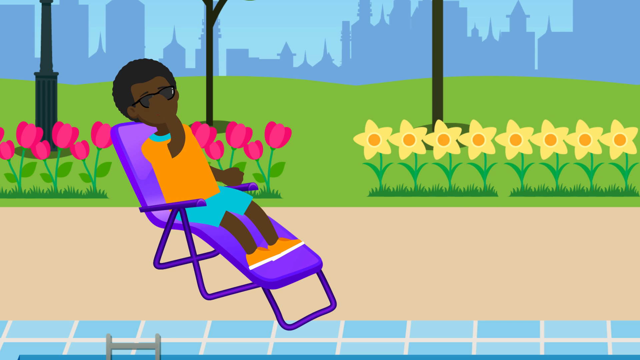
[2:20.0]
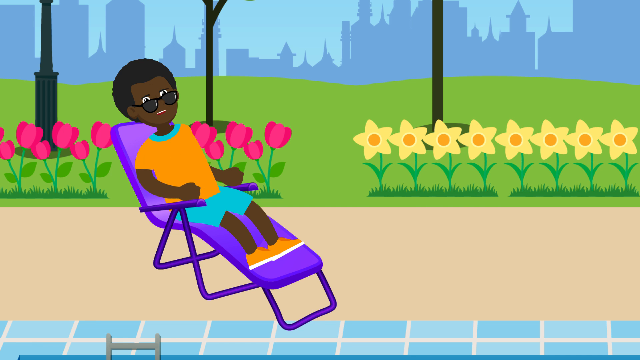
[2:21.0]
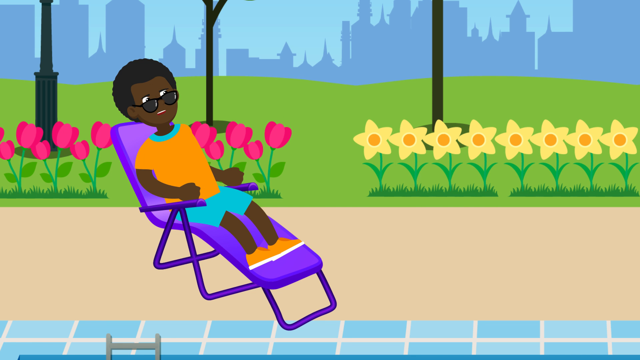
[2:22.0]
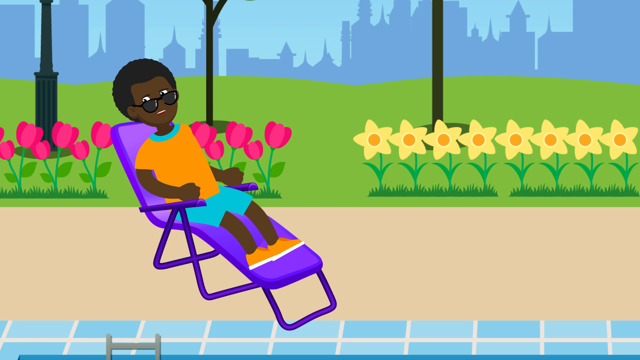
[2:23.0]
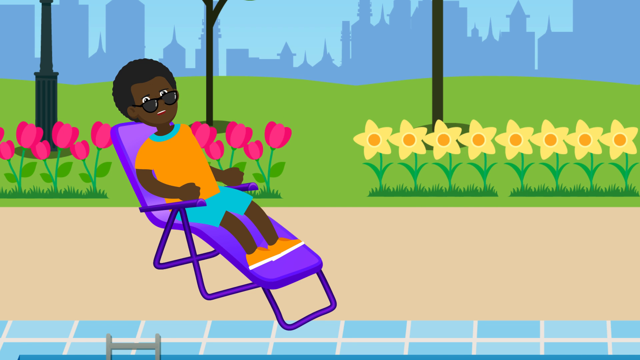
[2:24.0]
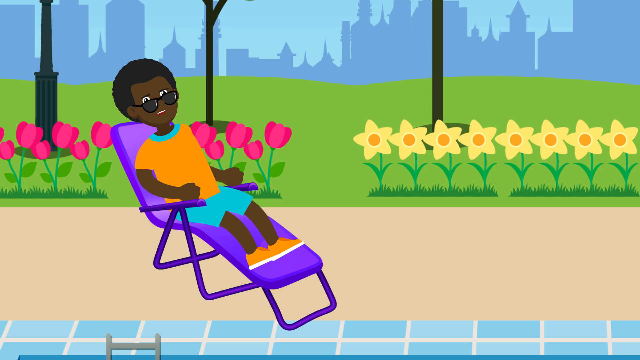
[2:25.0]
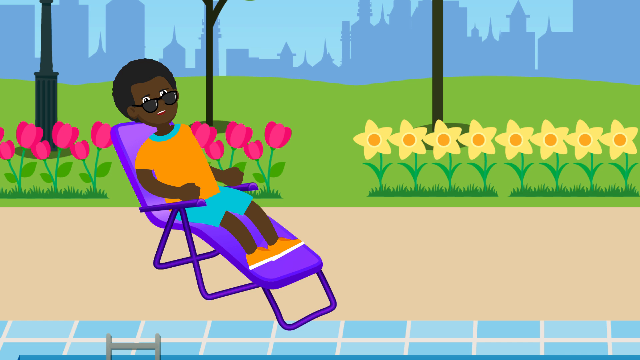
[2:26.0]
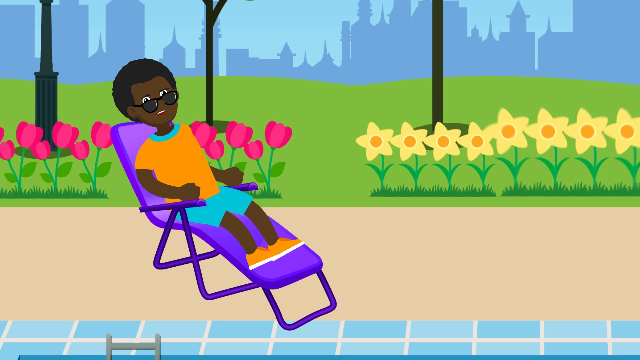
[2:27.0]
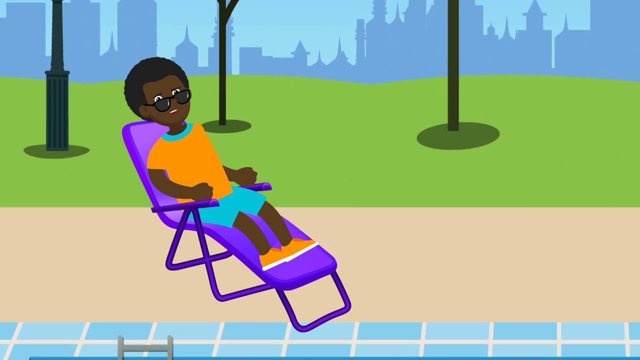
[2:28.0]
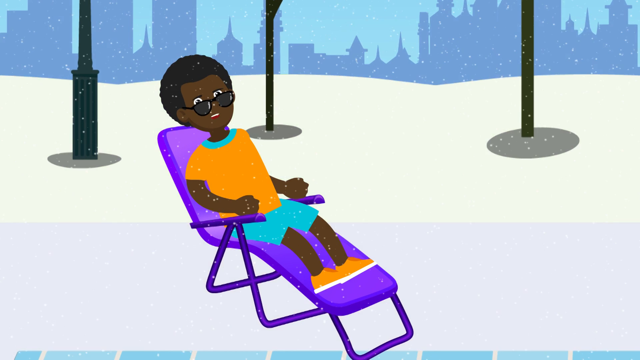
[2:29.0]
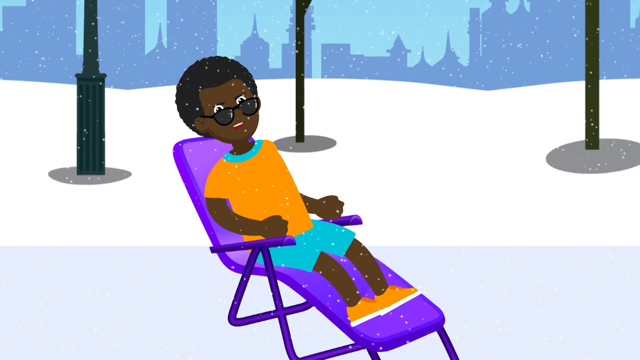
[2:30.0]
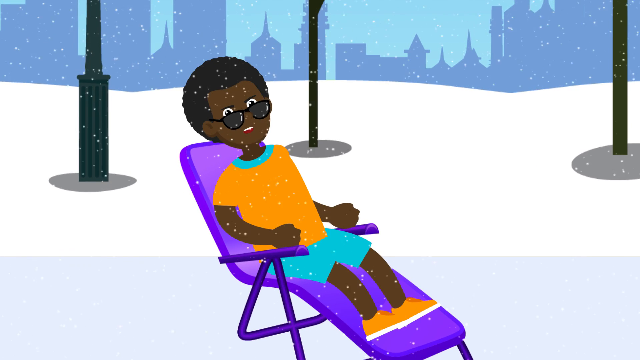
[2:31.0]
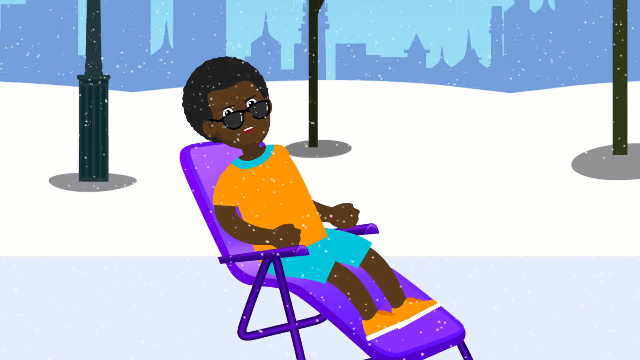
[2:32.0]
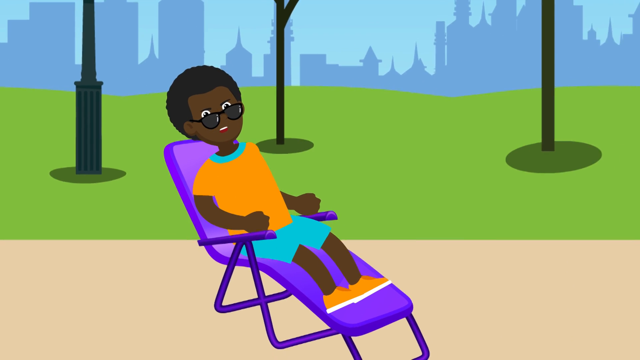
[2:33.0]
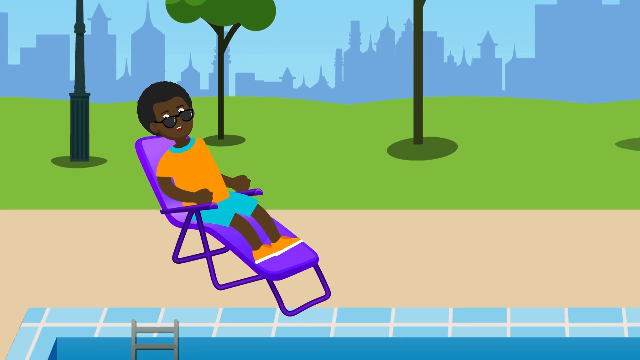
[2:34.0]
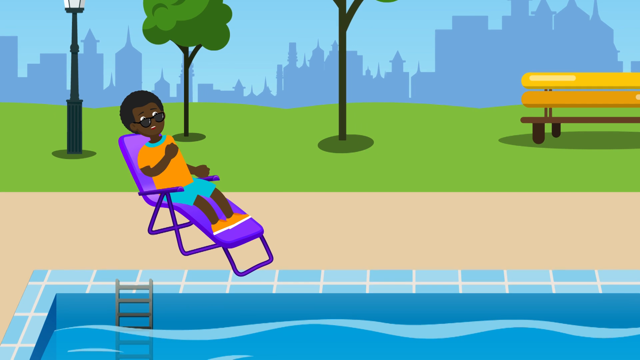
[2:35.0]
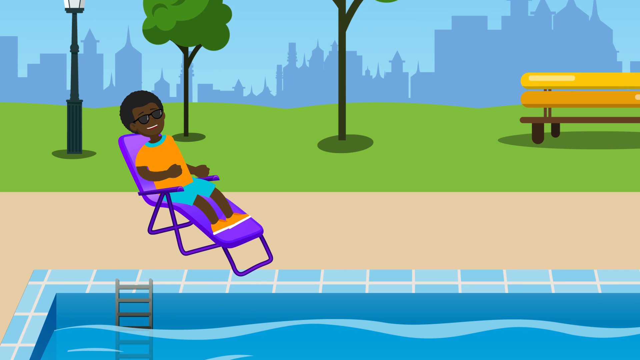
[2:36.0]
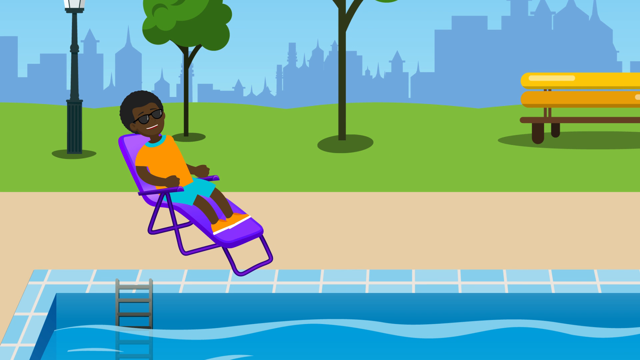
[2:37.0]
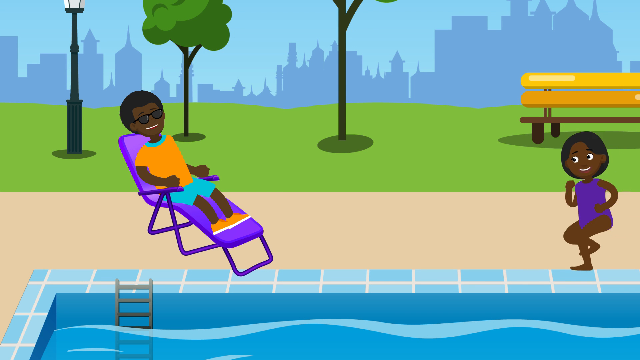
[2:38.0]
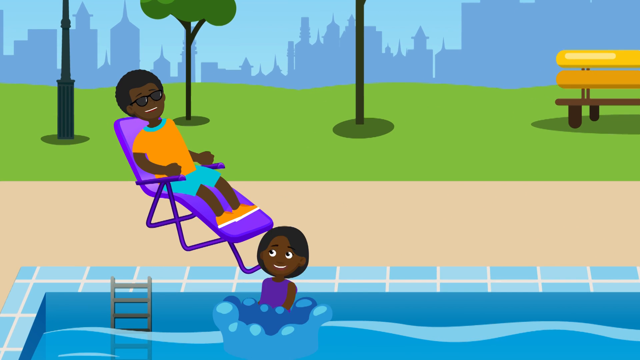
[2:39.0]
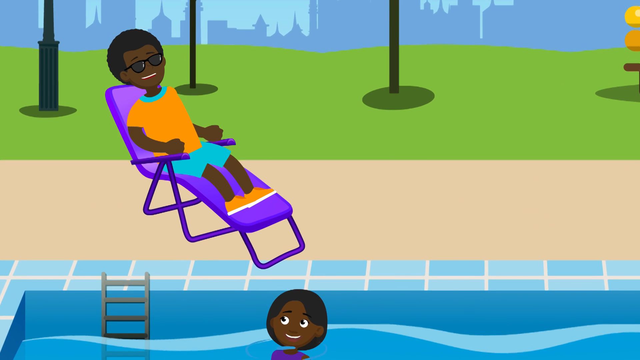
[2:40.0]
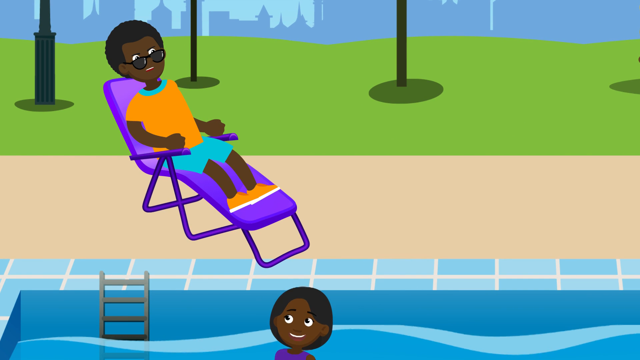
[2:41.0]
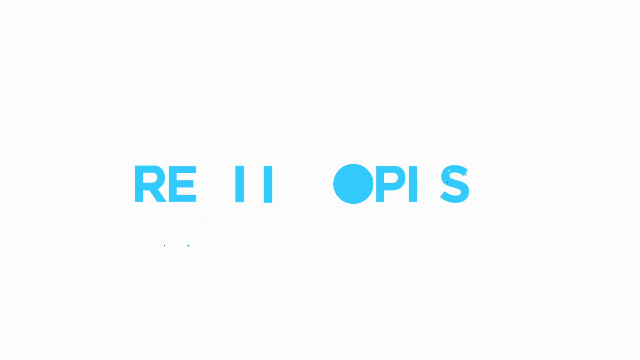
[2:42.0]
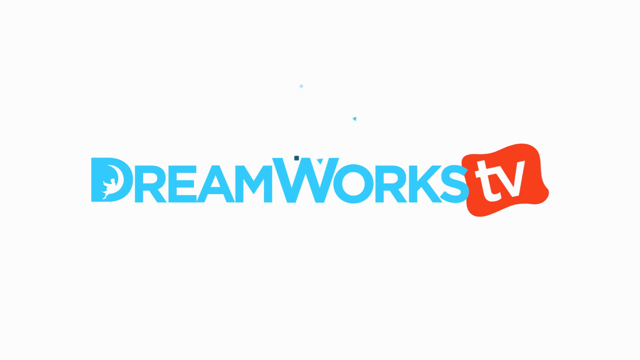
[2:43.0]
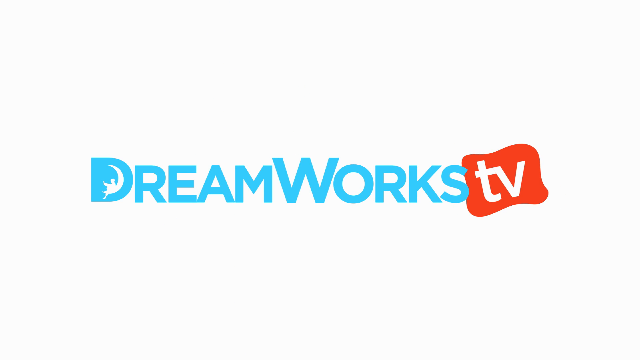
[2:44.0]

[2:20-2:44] The man with brown skin and afro hair looks somewhat confused and scared; behind his glasses his eyes move from side to side, with his eyebrows a little lowered. The flowers disappear and the whole park fills with snow again as it snows once more, but the man's expression and body language do not change; he keeps looking from side to side. Winter passes, the snow is removed, and the park returns to normal as it was at the start. The man smiles again and pushes his dark glasses so that they cover his eyes completely. A woman with brown skin and a blue swimsuit runs and throws herself into the pool, splashing water, which makes the man angry. The video ends with the title "DreamWorks TV" in the middle of a white screen.